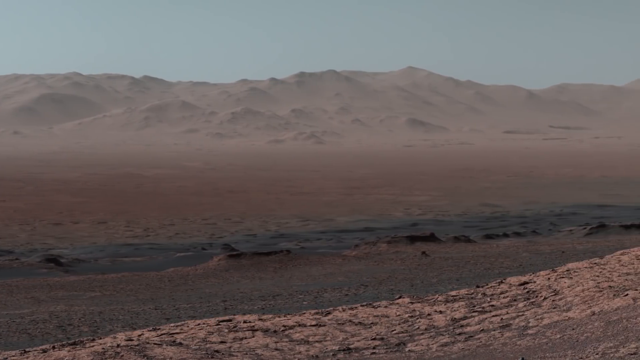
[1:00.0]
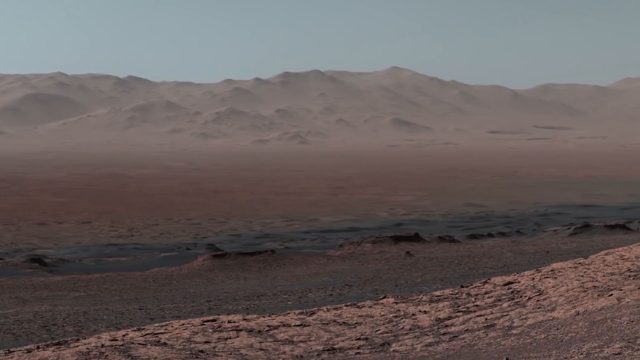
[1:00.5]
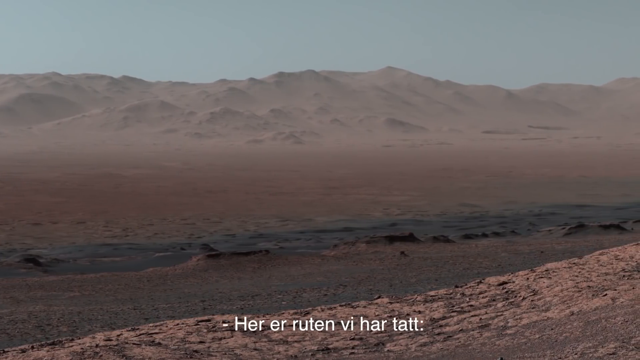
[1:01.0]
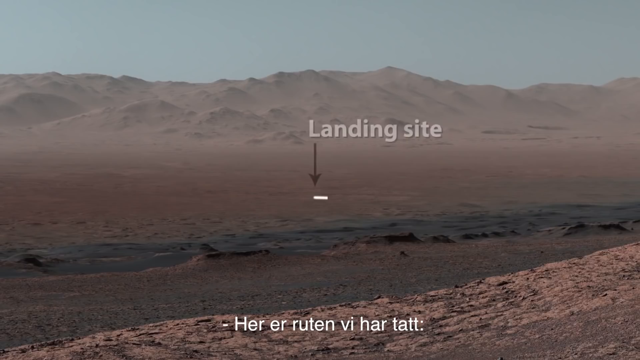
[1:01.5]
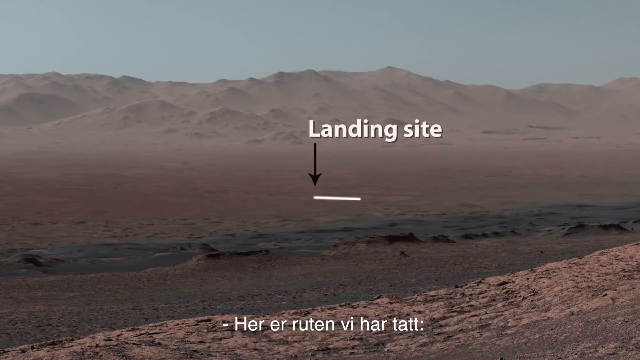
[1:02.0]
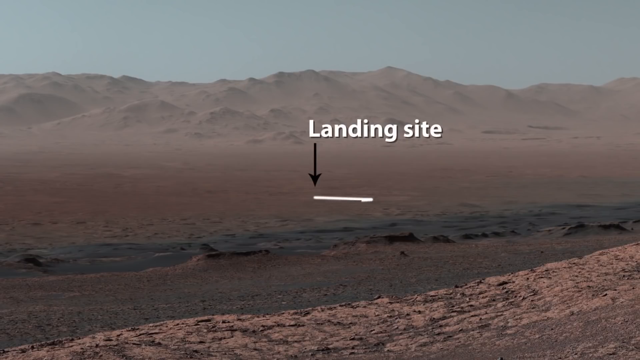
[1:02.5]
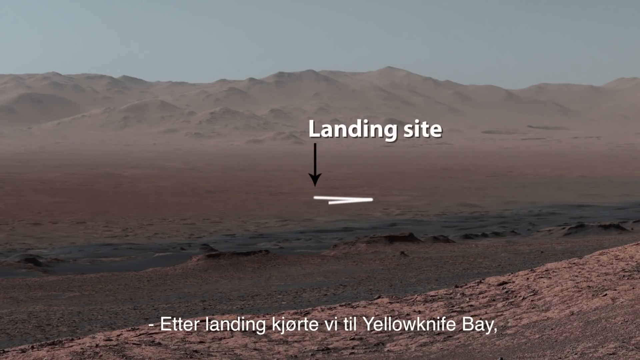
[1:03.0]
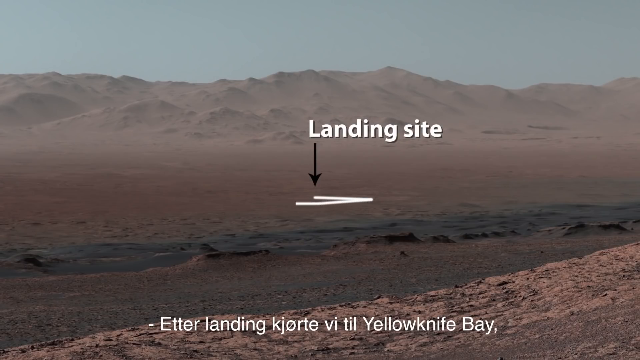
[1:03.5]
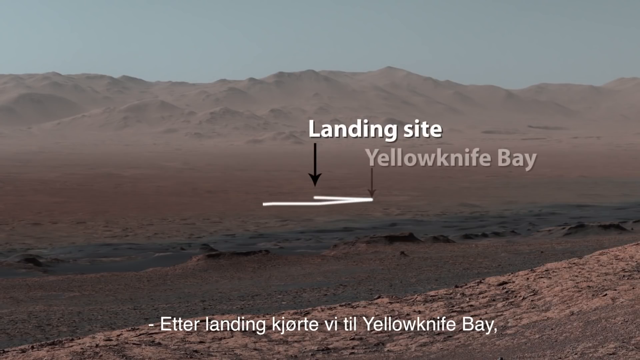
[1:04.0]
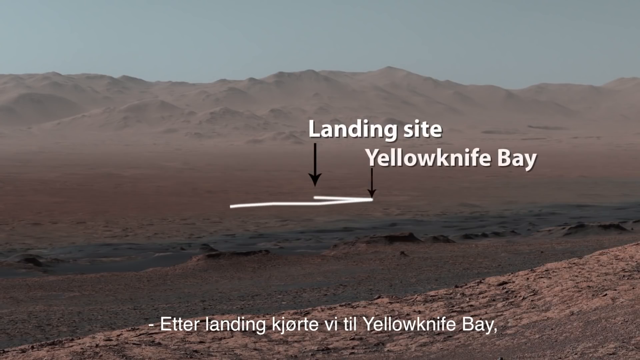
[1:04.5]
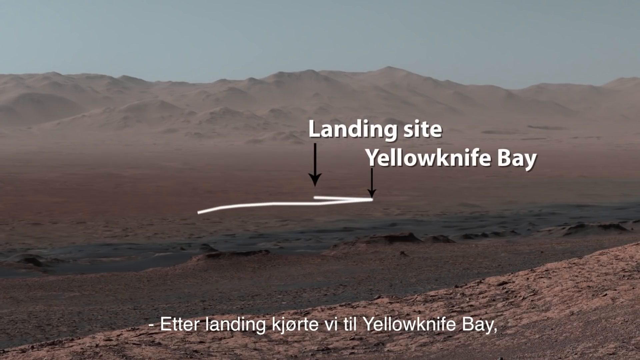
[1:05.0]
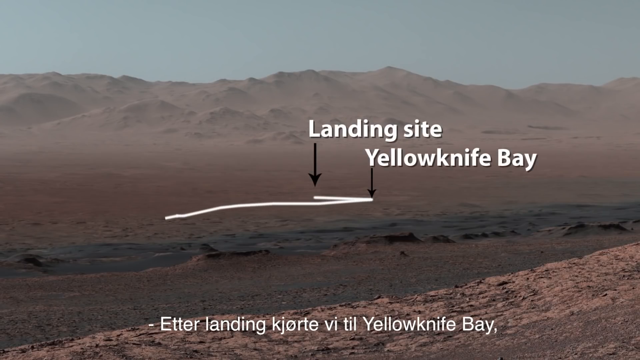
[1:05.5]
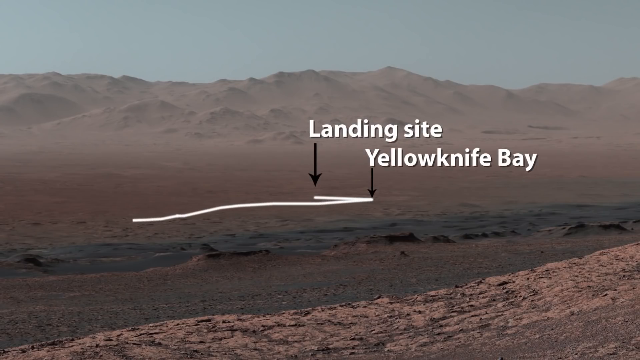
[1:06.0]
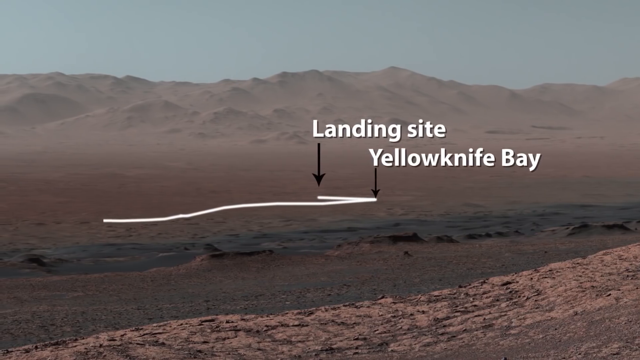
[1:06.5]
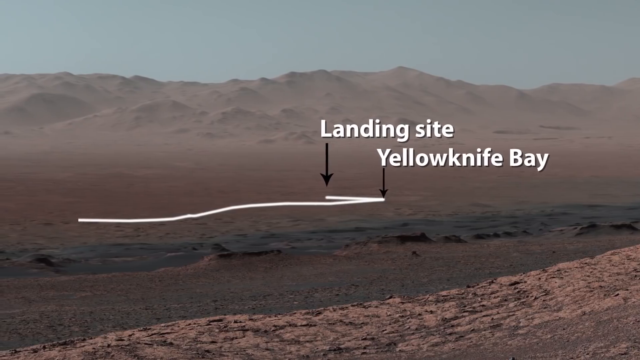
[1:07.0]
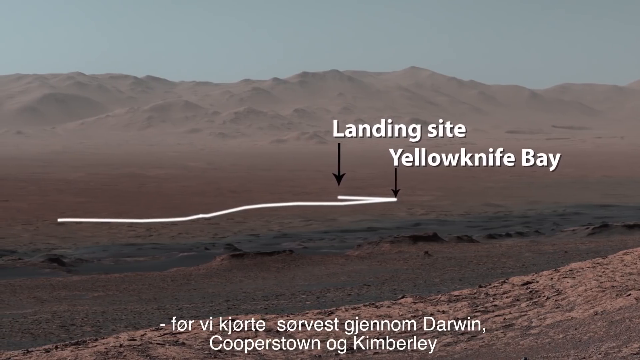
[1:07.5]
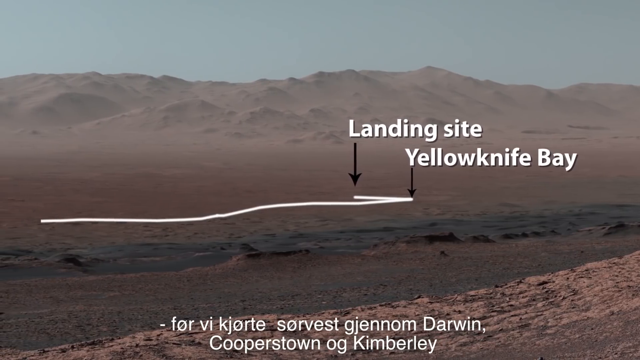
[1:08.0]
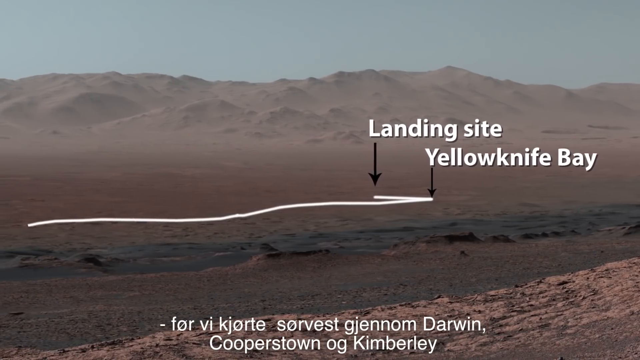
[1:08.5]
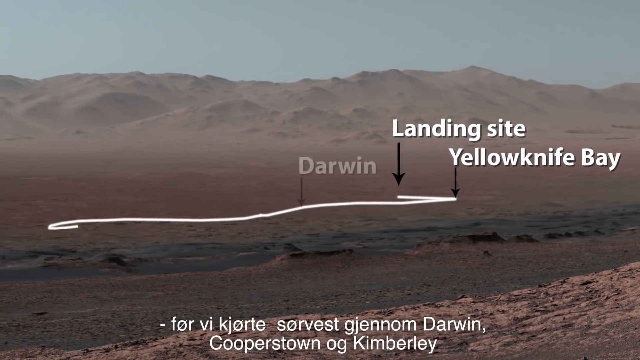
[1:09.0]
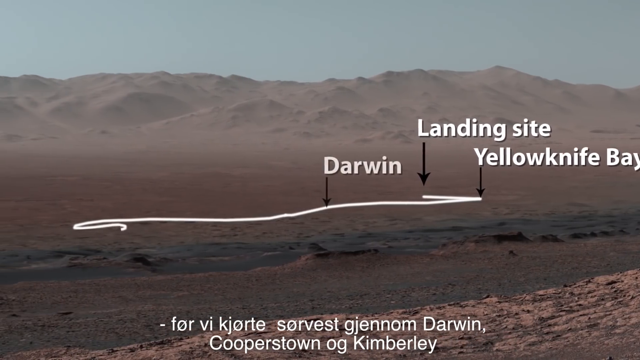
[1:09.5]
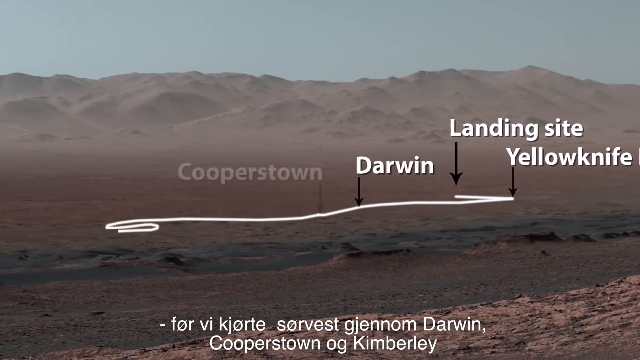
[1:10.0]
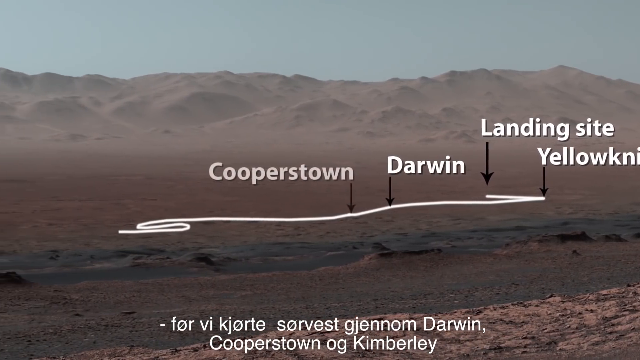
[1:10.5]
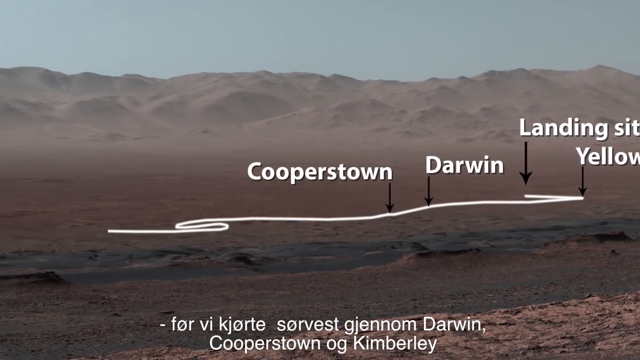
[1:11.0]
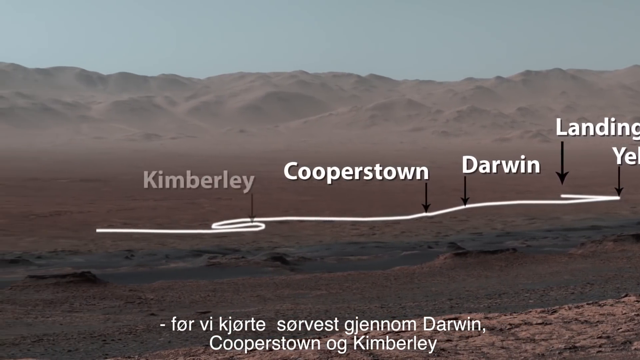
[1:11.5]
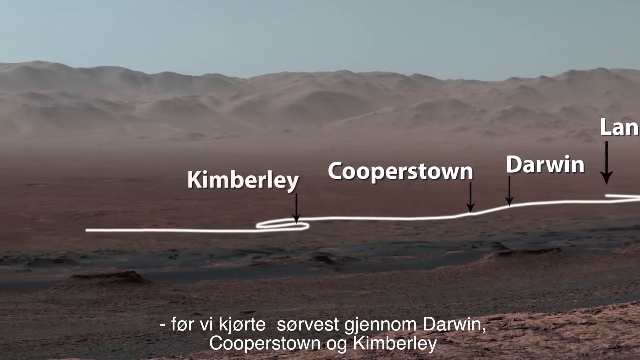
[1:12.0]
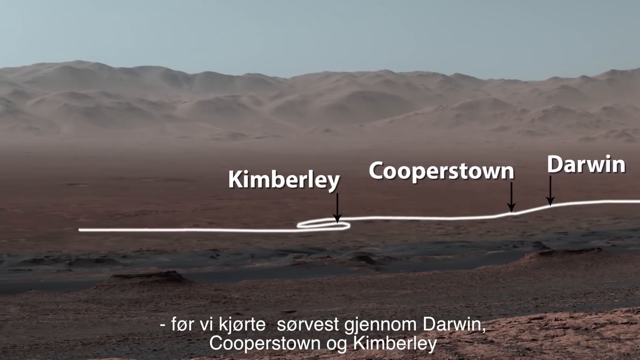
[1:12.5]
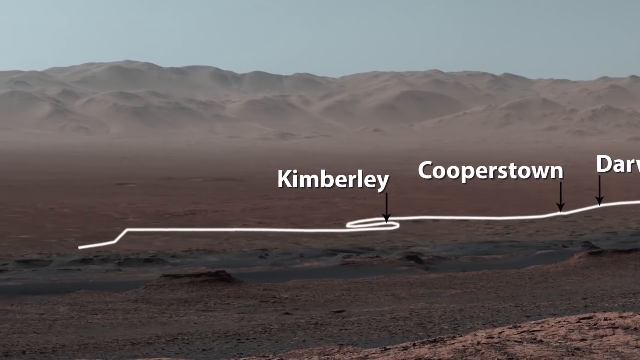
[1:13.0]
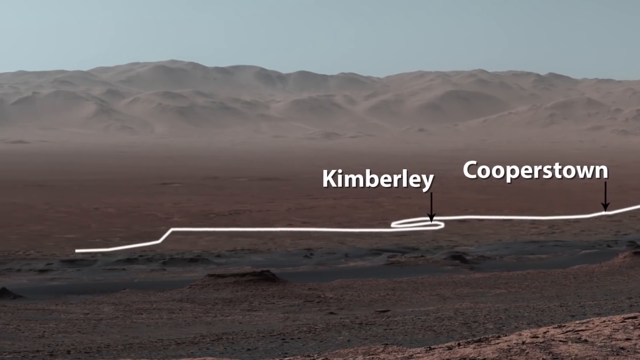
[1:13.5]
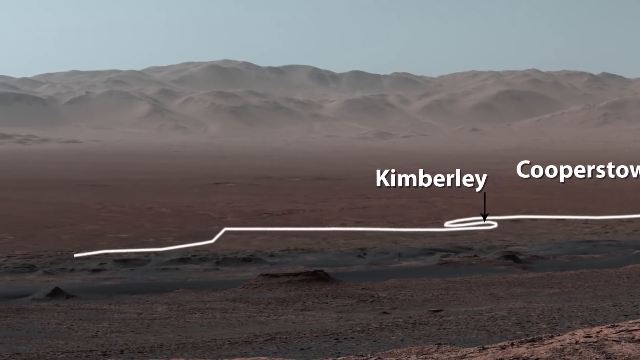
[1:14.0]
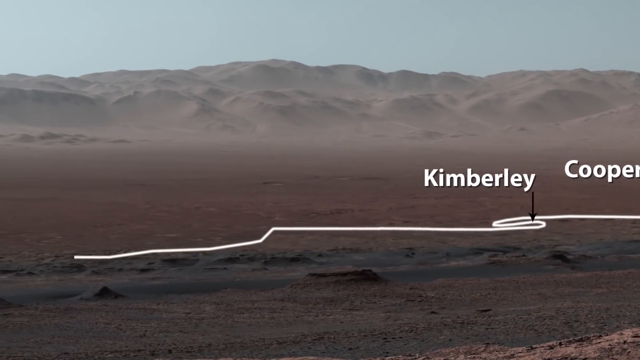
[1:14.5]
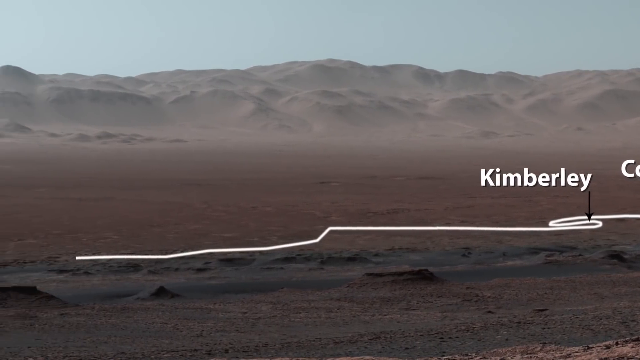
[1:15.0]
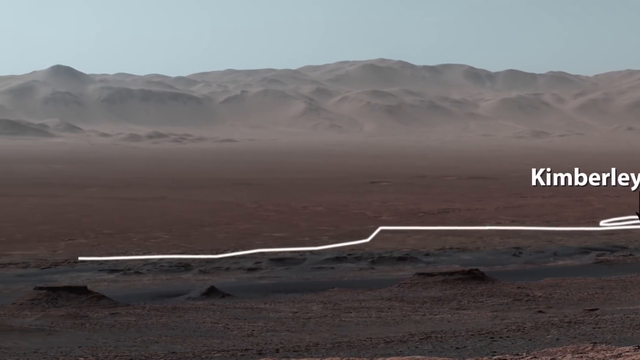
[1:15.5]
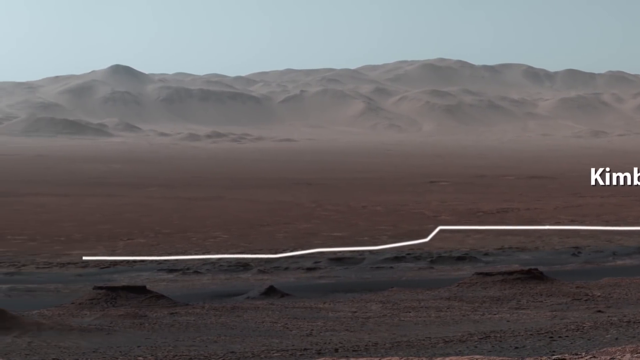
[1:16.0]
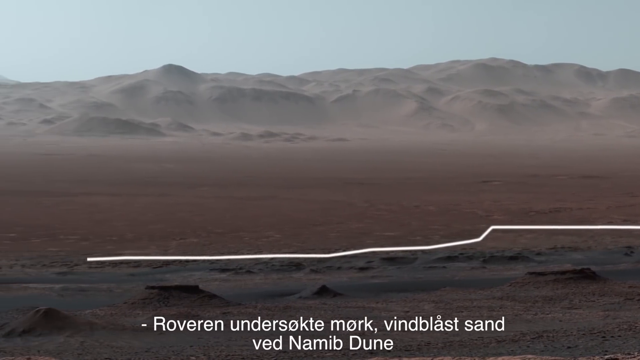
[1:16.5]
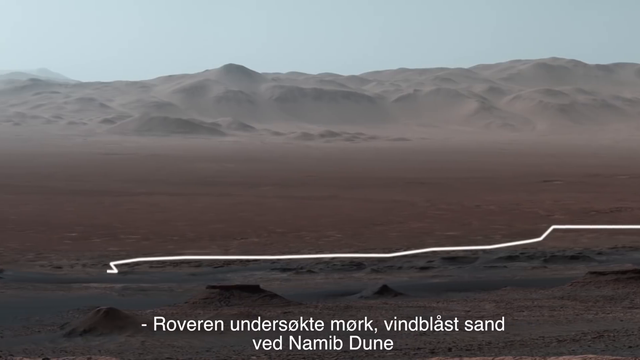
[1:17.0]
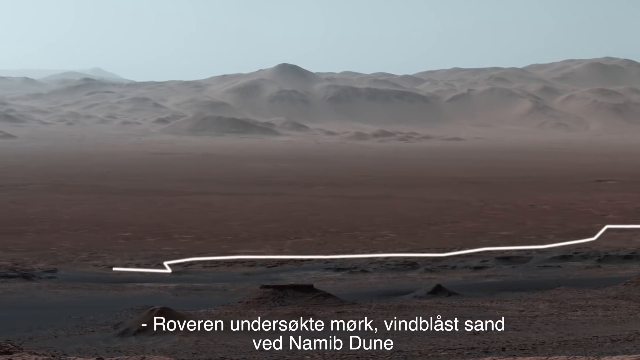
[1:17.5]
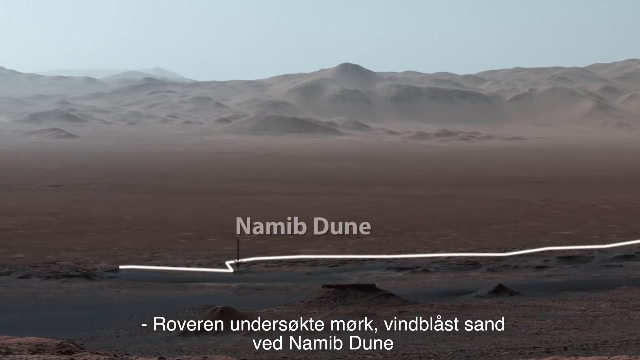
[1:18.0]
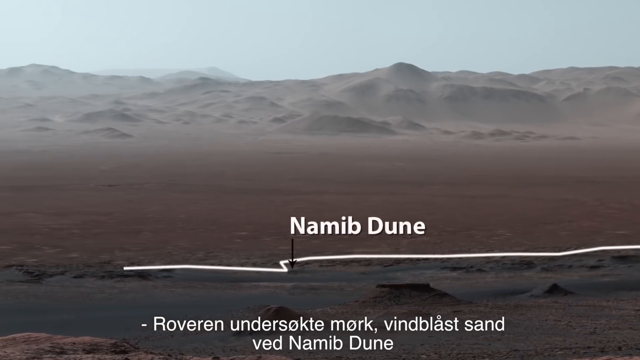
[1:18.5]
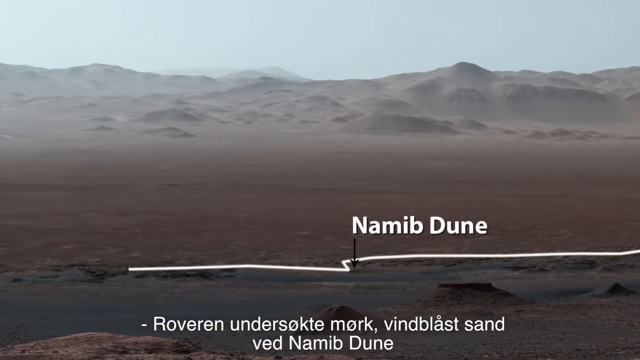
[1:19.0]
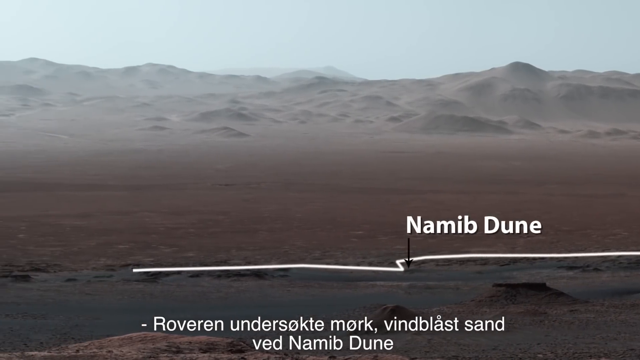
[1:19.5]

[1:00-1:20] A mountainous area with a somewhat brown color shows many ripples in what looks to be a pile of rocks covered in dirt. The ground is brown, with a black, sludgy mud area, a lot of gravel rocks and rough surfaces. The camera moves to the right, and white text reading "landing site" appears with a black arrow pointing to more white lines. English text at the bottom reads "landing" and "Yellowknife Bay", and a white line continues across the screen to another black arrow labeled "Yellowknife Bay". The white line keeps going toward the left of the screen, and the camera follows it. Text at the bottom names locations: "Darwin", "Cooperstown" and "Kimberly". A black arrow appears with white text reading "Darwin, Cooperstown, Kimberly", and the white arrow continues toward the left. Text in another language continues at the bottom, with locations like "Nabin, Dune".